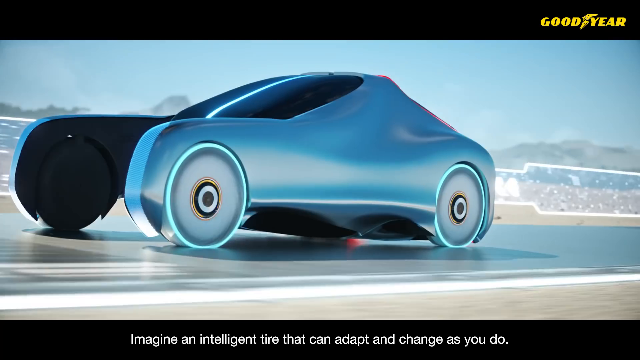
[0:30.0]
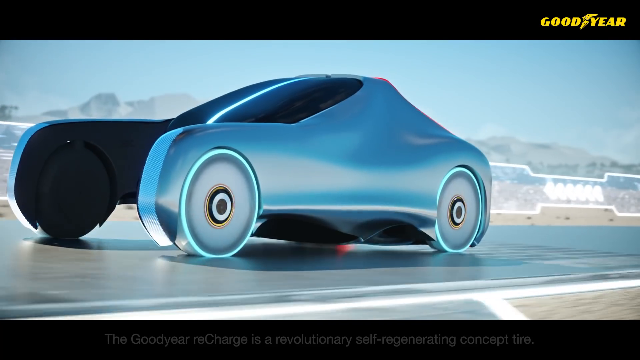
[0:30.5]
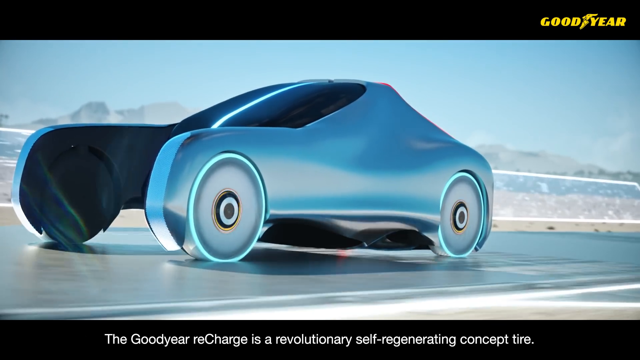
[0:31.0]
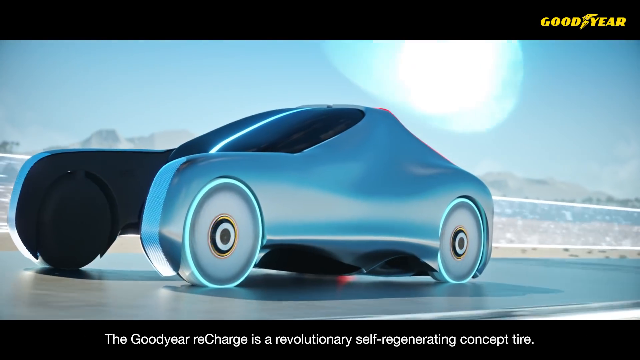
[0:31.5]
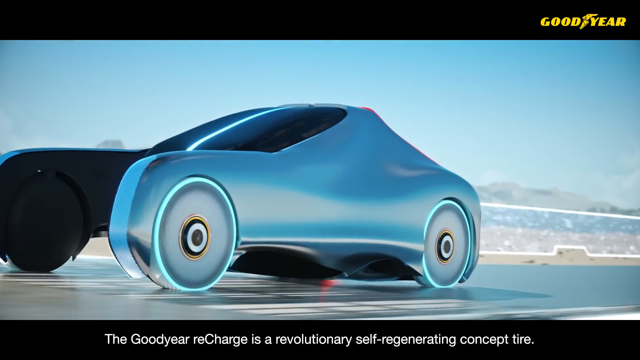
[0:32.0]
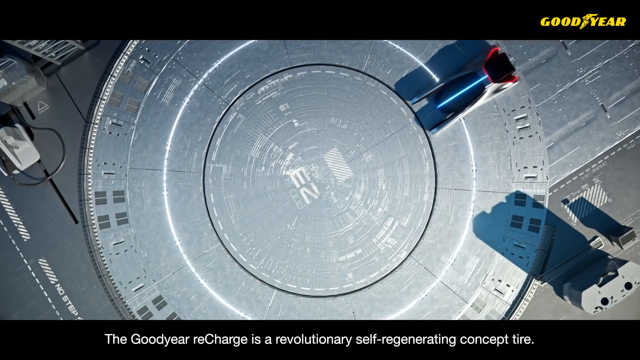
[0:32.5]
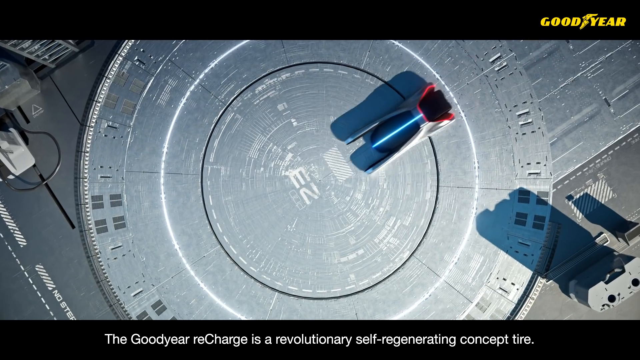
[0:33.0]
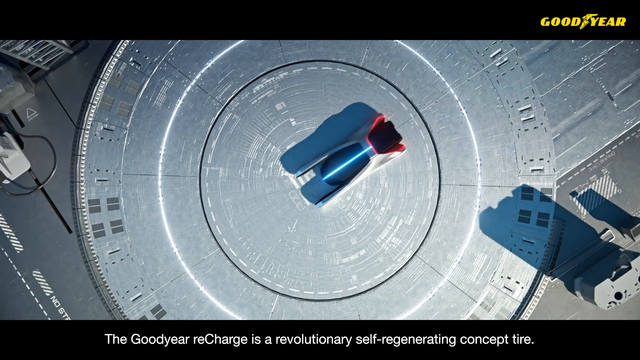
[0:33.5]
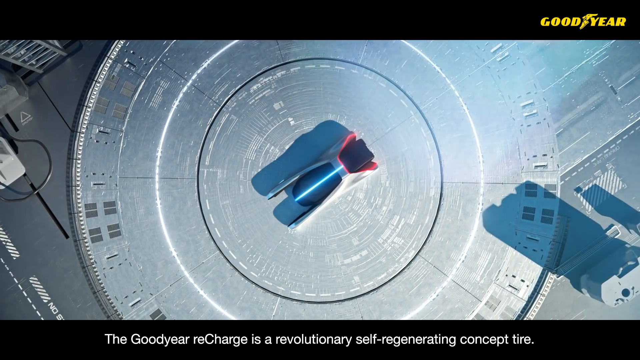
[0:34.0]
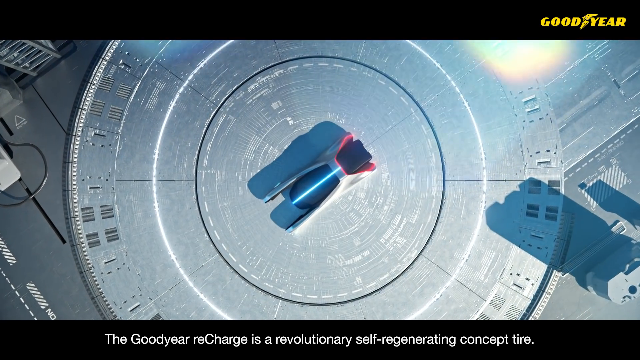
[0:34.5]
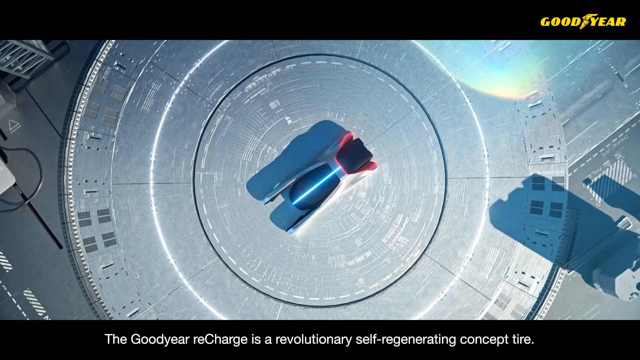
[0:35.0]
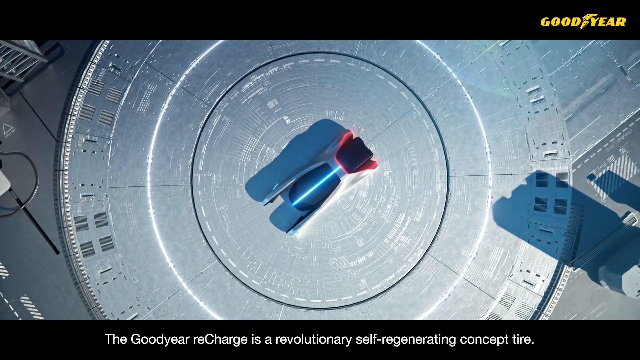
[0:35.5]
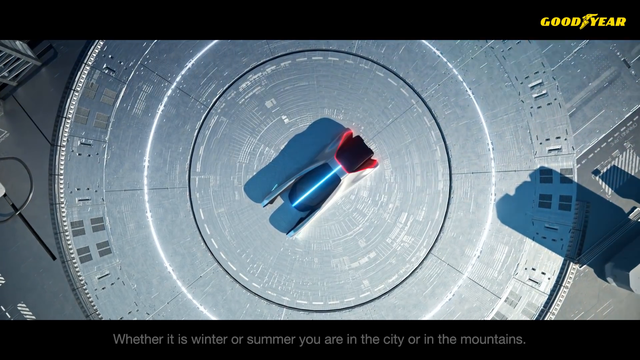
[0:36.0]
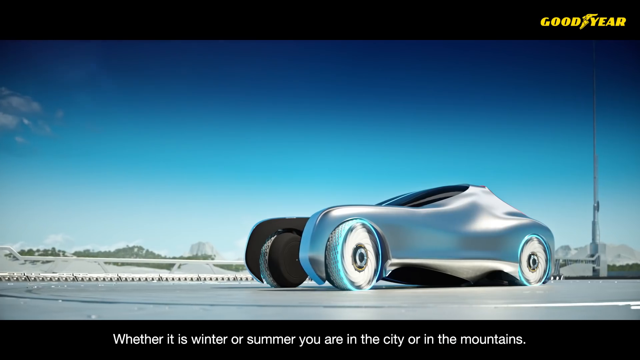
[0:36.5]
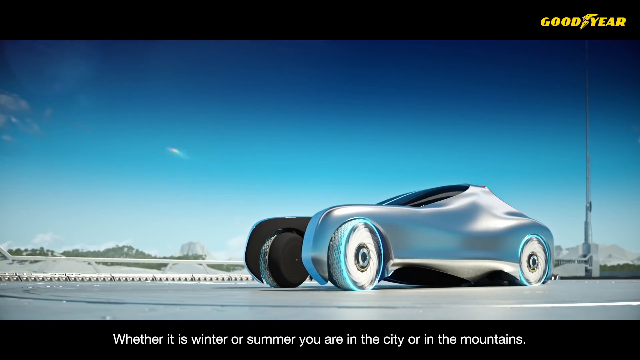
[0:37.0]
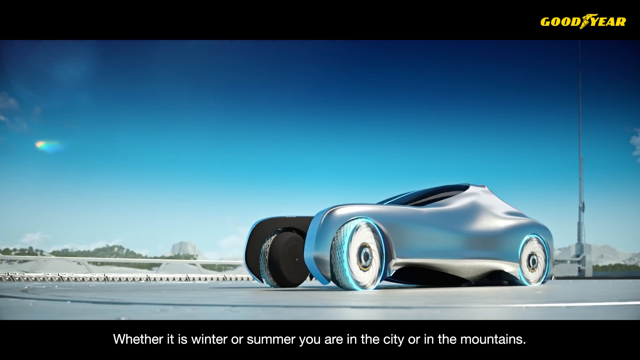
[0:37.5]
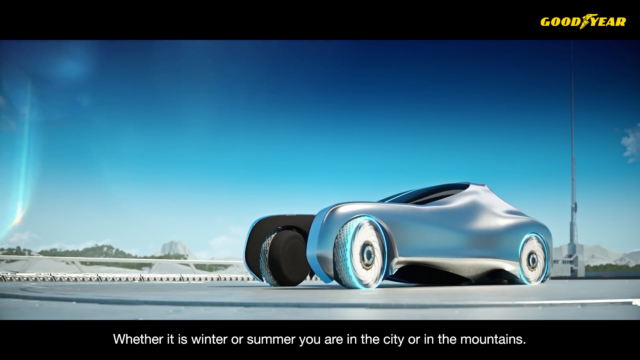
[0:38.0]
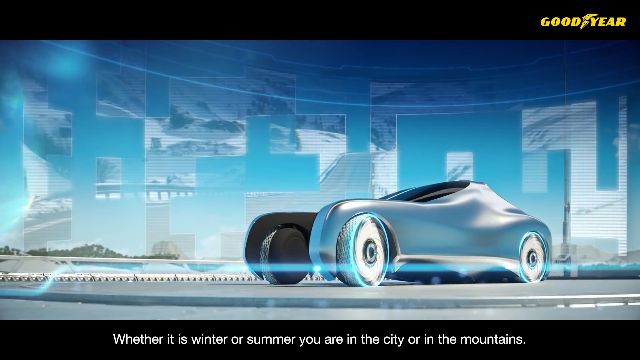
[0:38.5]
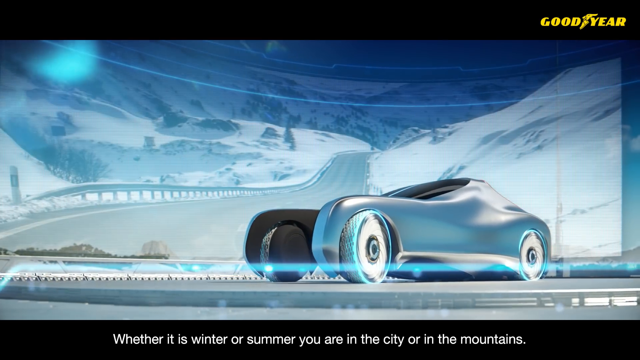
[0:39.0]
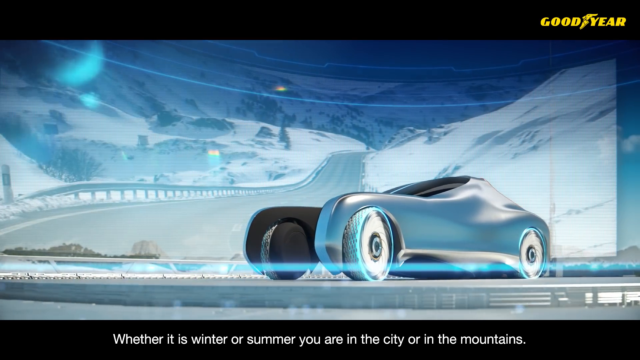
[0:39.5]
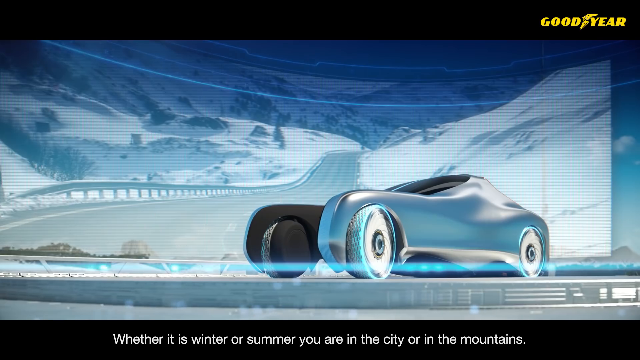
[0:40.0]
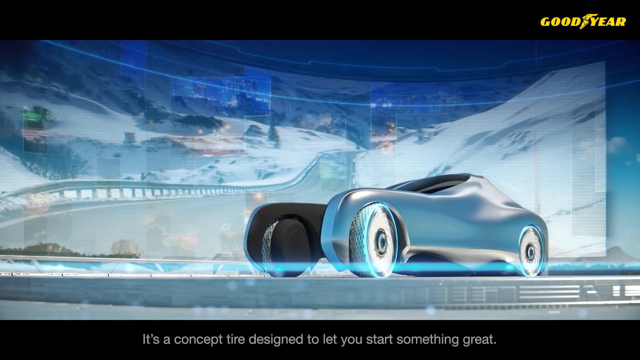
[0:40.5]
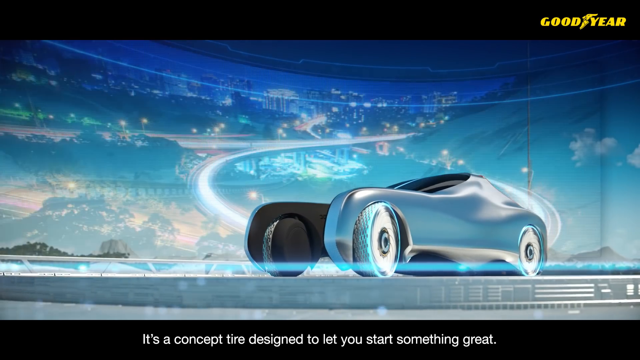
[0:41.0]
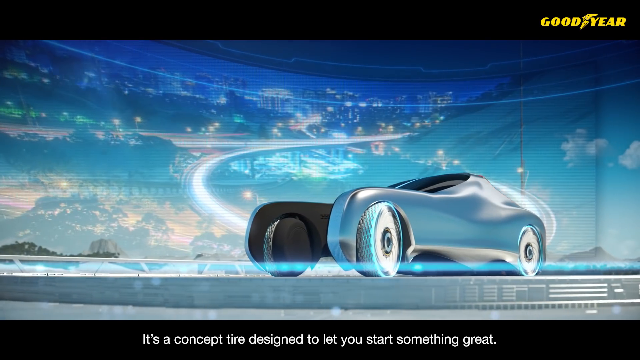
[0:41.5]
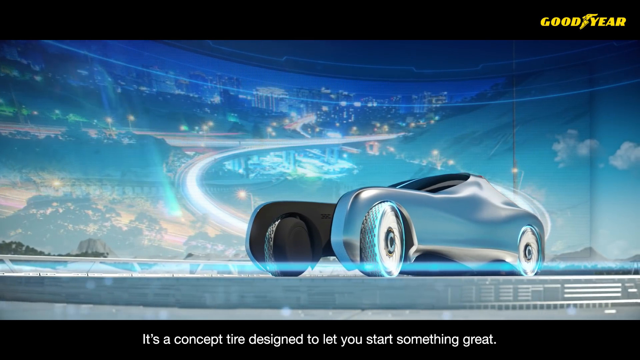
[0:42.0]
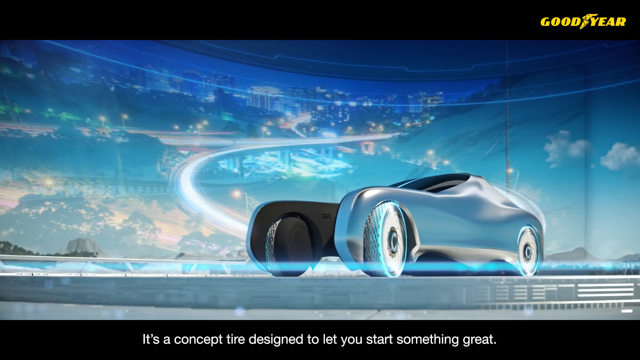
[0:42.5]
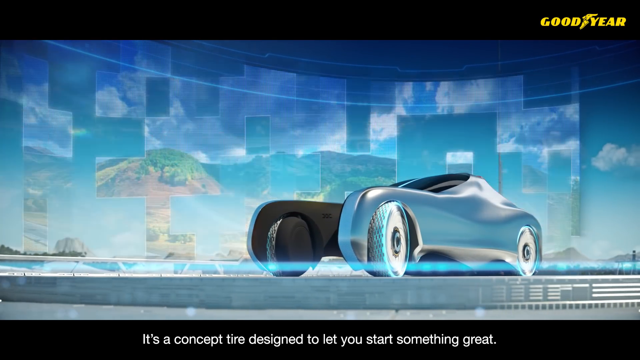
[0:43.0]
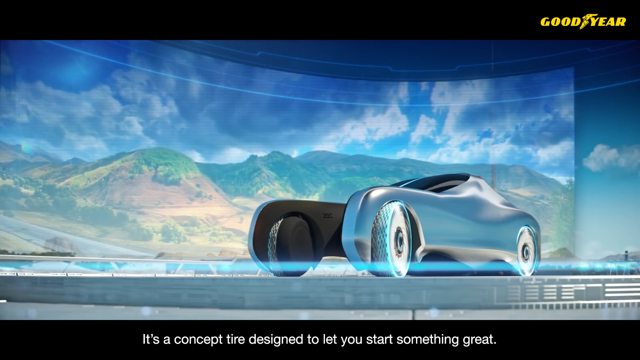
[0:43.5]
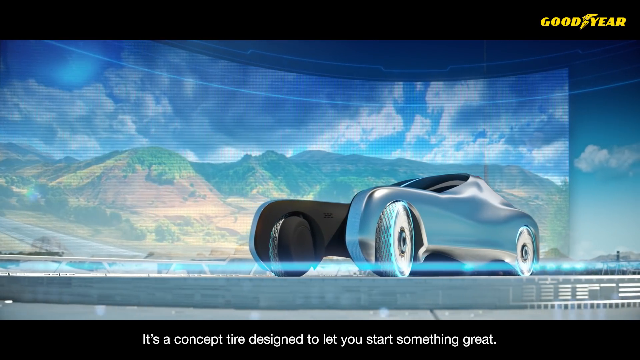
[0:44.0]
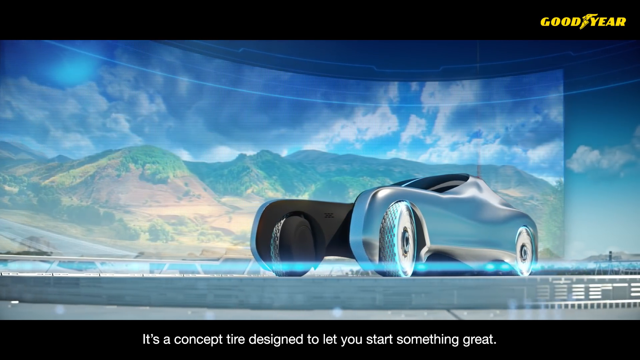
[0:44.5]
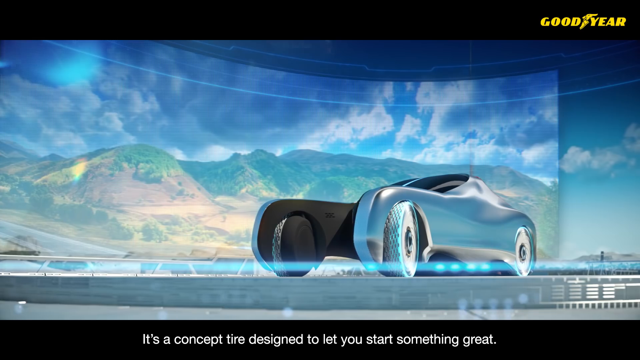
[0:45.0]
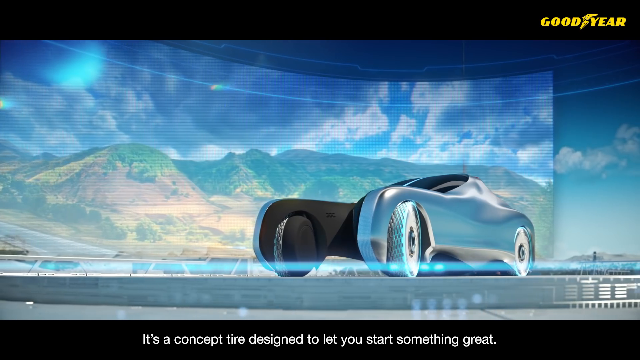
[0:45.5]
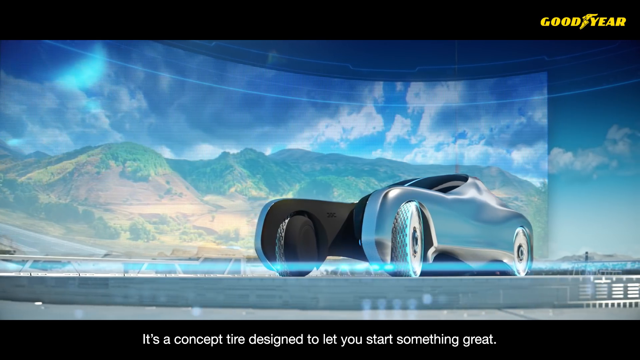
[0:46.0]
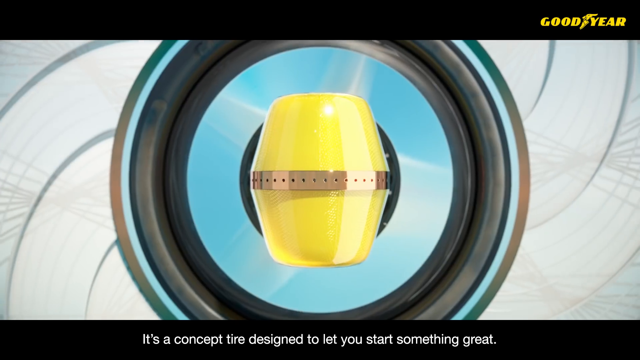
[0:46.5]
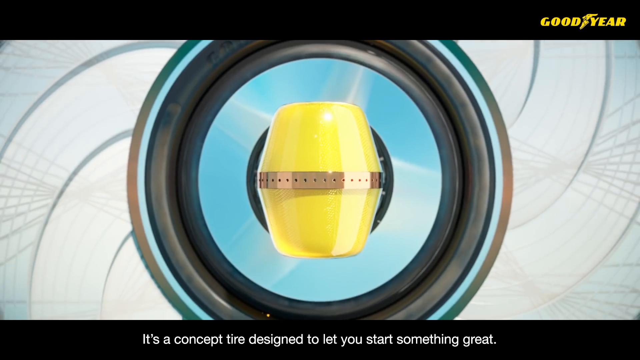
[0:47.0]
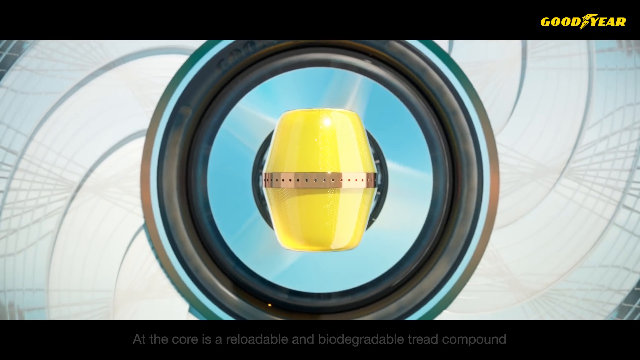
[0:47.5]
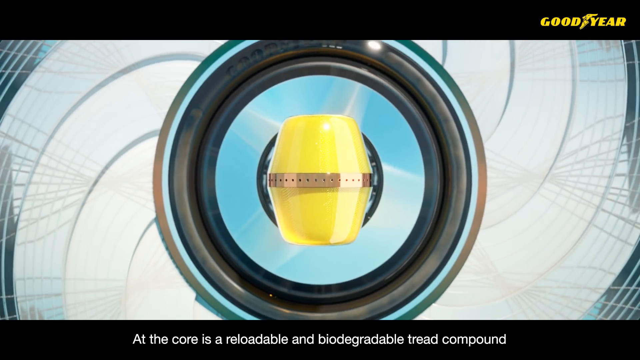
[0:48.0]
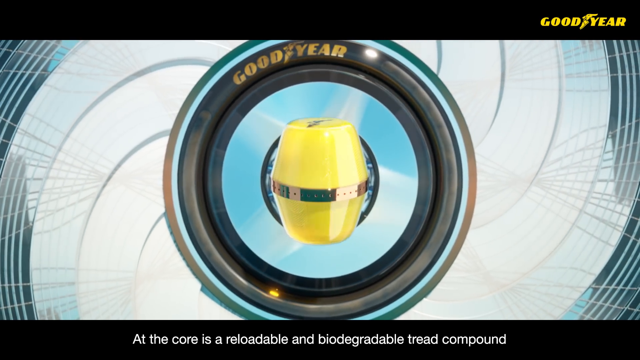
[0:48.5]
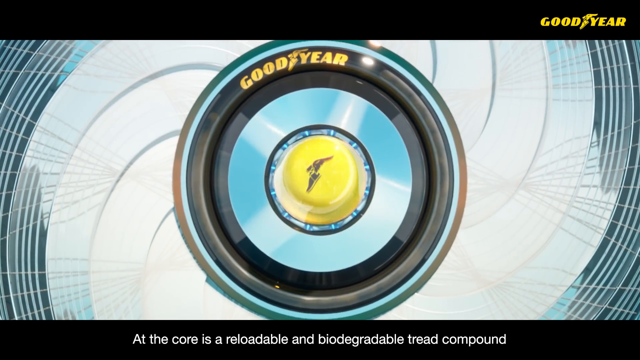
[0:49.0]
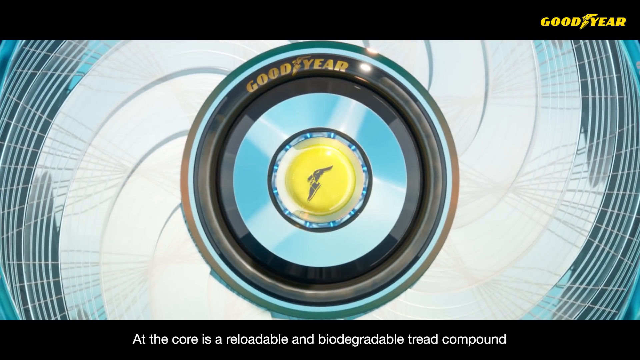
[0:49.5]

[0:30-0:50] The same car is shown in more detail: an ice blue, shiny car with no doors that looks almost as if a whole chunk is missing, either at the front or the back. The focus is on the tires, and two wheels are visible on the side of the car in view. At one point the car stops moving and the side of the car is shown with a middle piece, which turns and plops into place; it is yellow. The car has driven into a place that resembles a huge space station car dealership, perhaps. There is a circle in the middle, seen from an aerial view. The woman does not appear; the footage is entirely of the car.